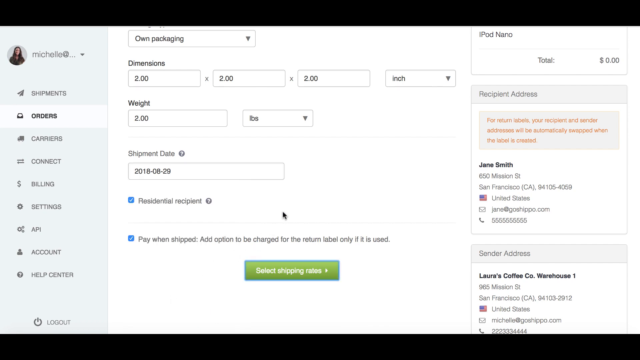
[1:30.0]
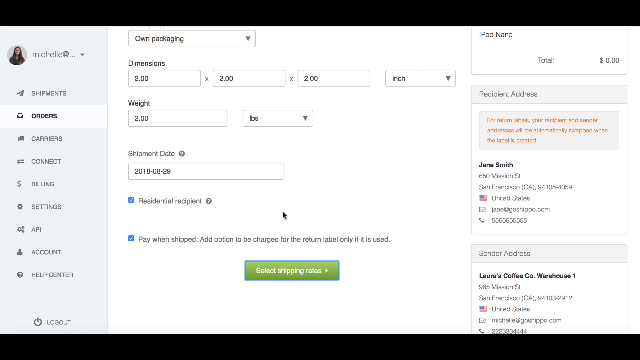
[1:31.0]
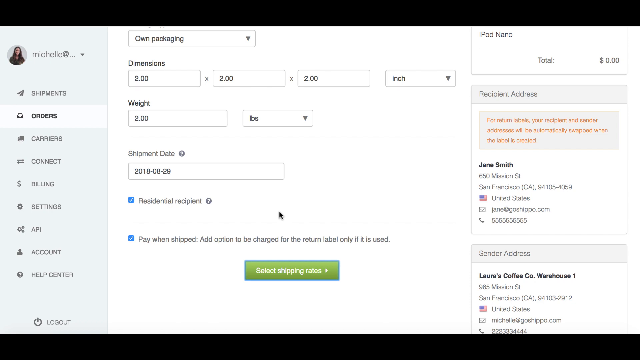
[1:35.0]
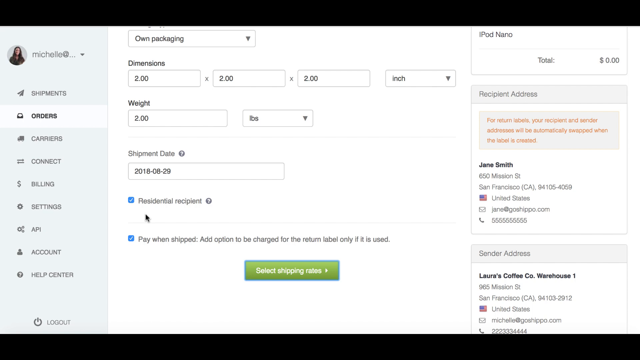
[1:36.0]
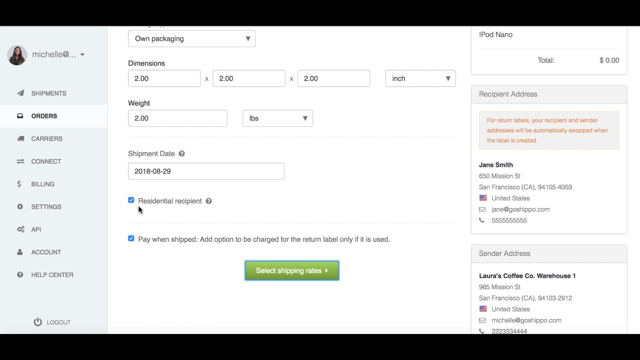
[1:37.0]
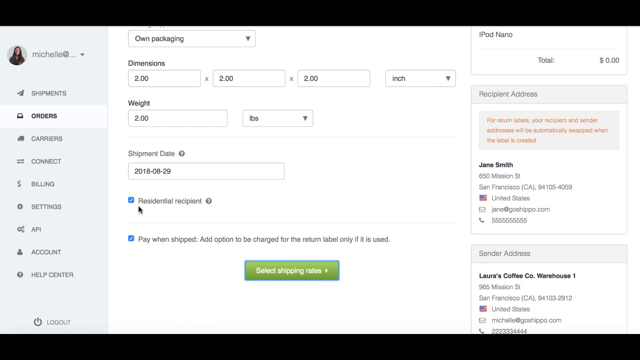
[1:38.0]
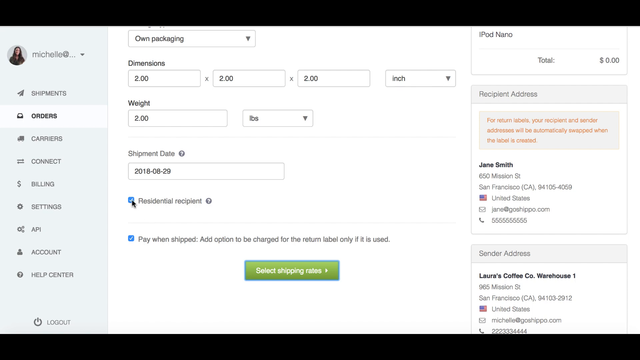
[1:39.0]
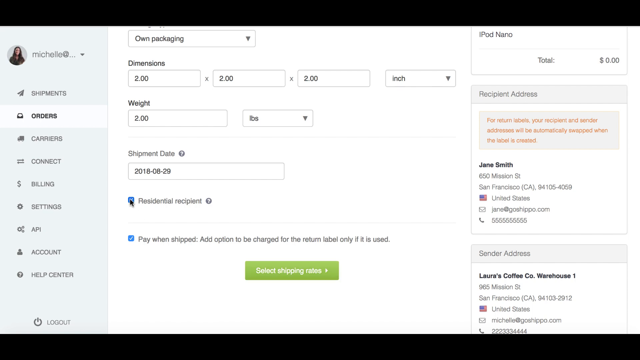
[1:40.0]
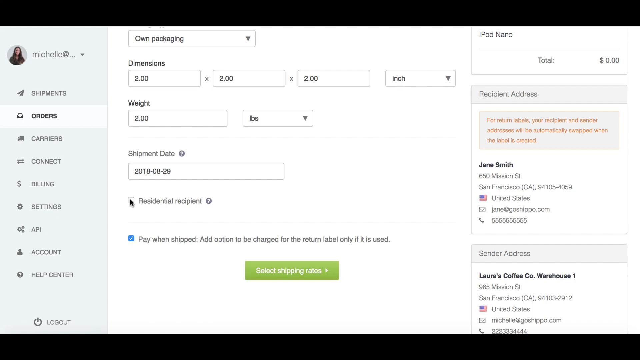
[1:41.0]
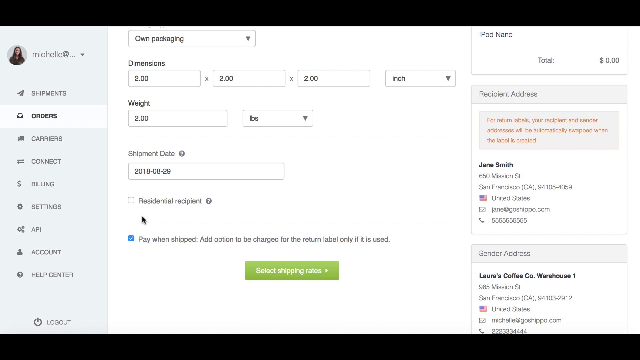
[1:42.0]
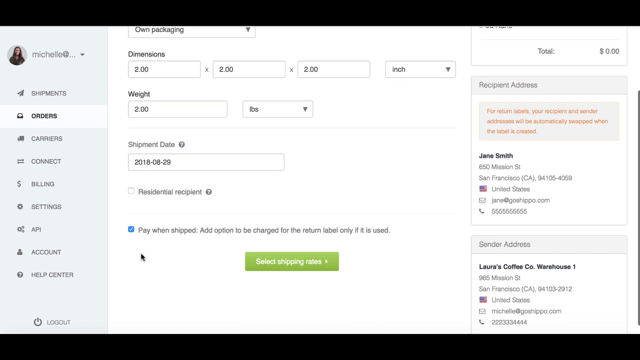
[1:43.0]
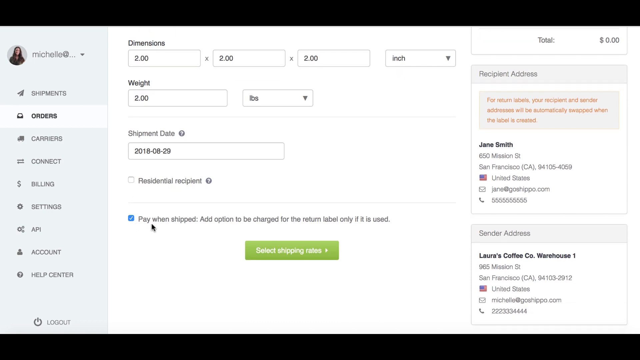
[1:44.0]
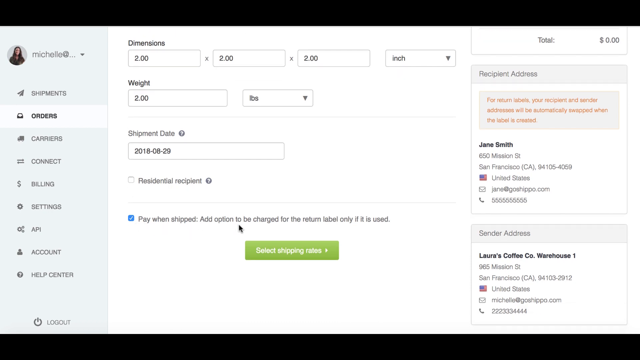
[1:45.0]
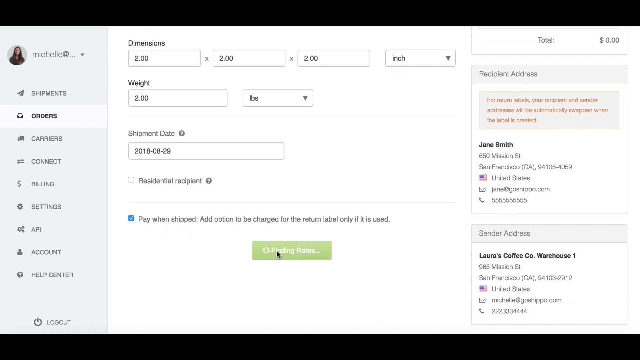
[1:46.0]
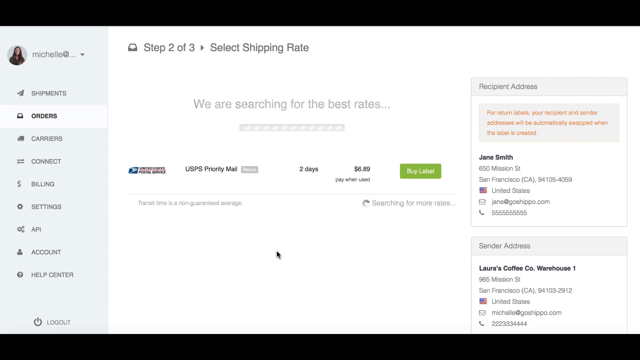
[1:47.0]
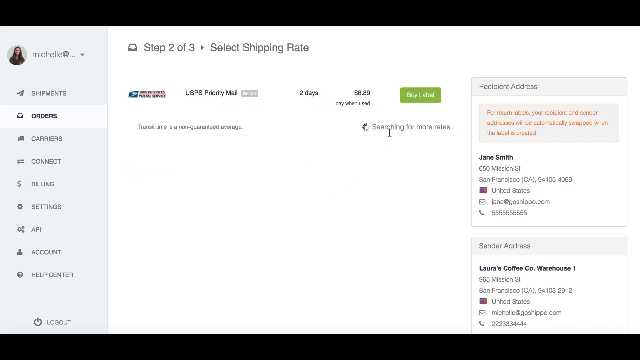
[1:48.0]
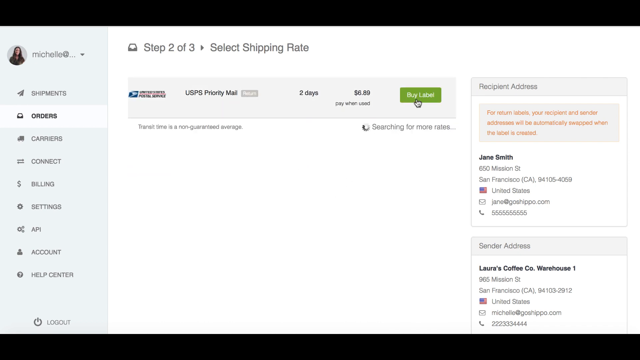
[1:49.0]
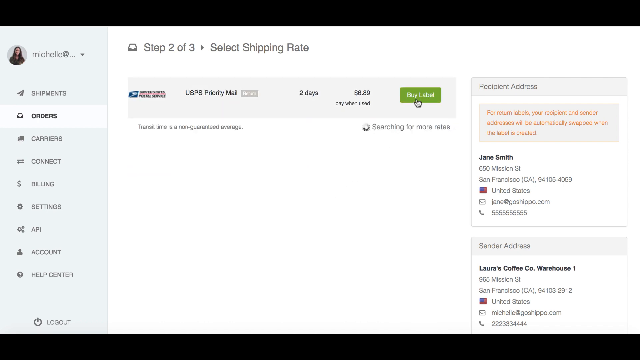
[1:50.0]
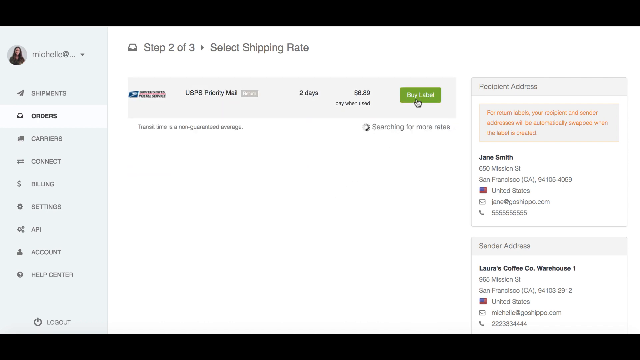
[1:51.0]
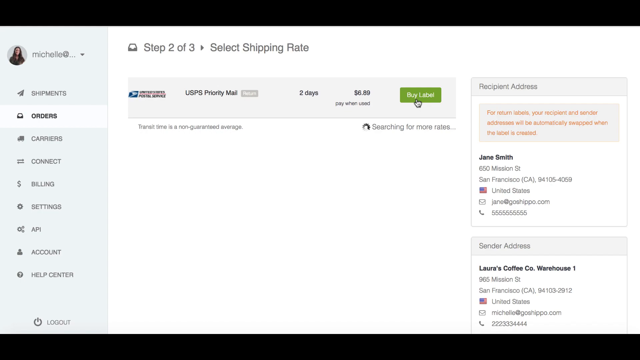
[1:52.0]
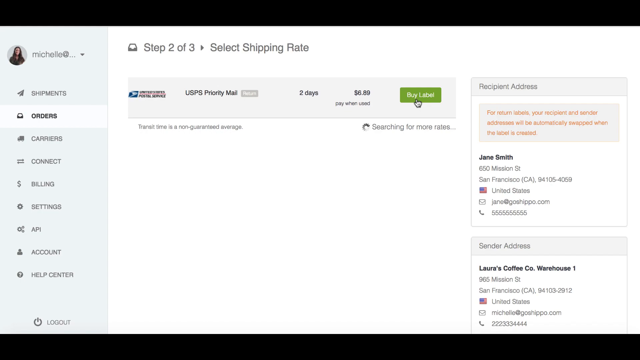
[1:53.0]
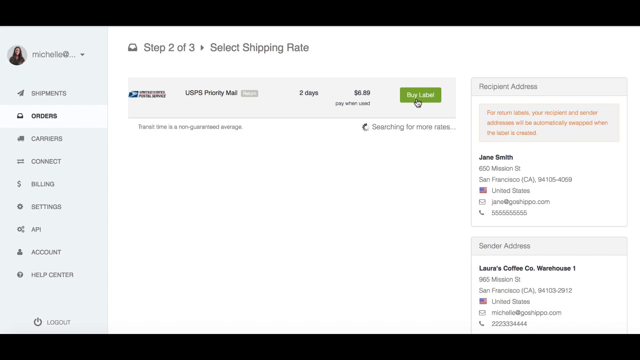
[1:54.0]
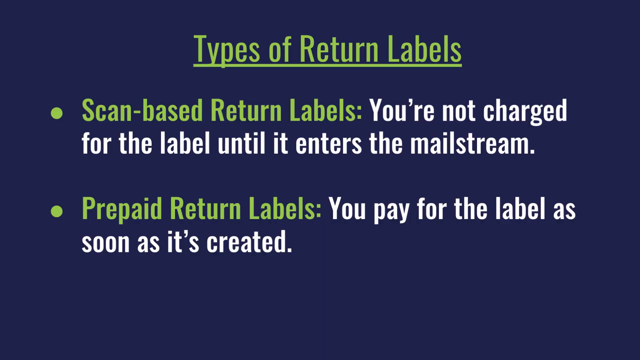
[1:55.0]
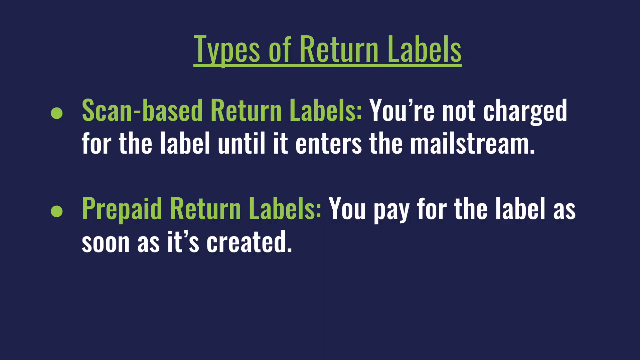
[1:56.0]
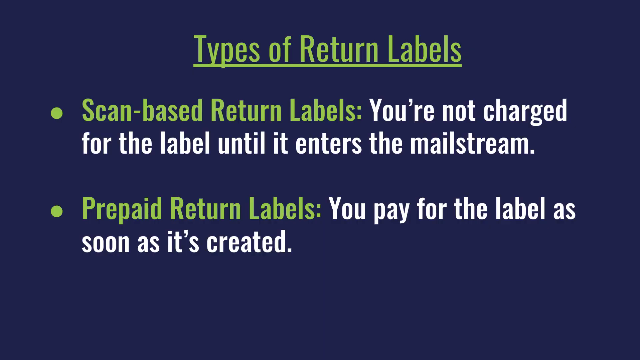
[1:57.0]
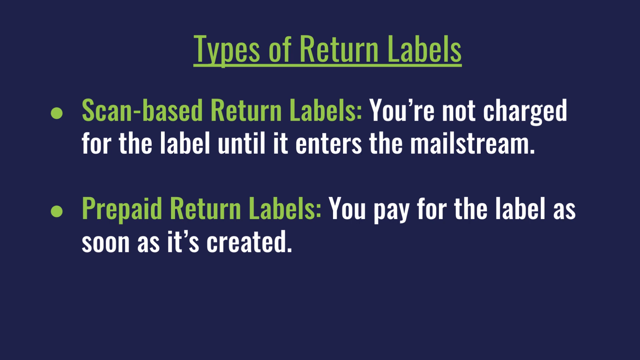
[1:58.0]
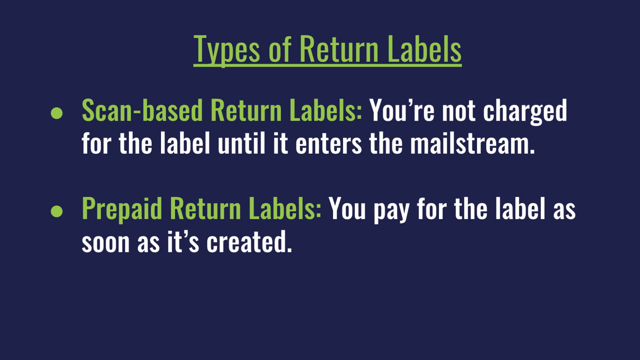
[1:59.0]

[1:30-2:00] The page under Orders no longer shows the hippo picture. It is the page for selecting one's own packaging, the package dimensions, the weight in pounds, and the shipping date, along with whether it is a residential recipient and whether to pay when shipped or pay on receipt. She moves over to "Residential Recipient" and unchecks it, switching to business, leaves everything else, and hits select. She moves on to step two of three, and a screen appears titled "Types of Return Labels," listing "Scan-based return labels: you're not charged for the label until it enters the mail stream" and "Prepaid return labels: you pay for the label as soon as it's created."